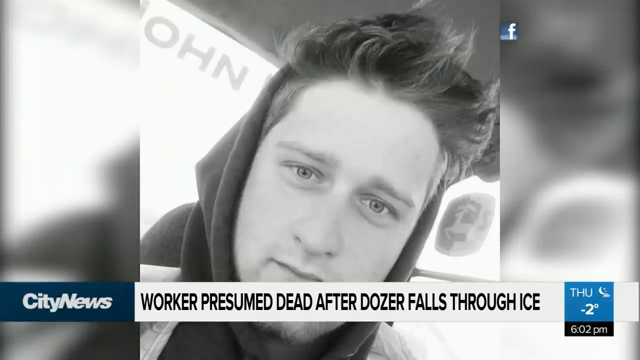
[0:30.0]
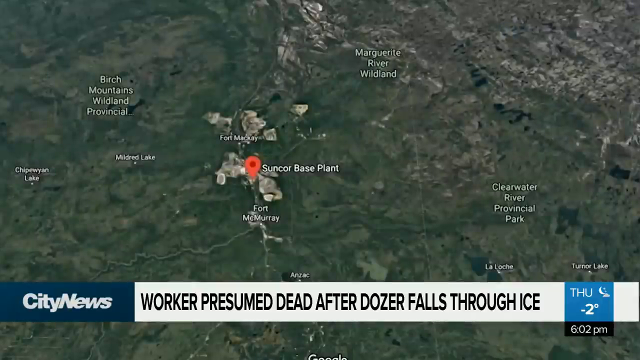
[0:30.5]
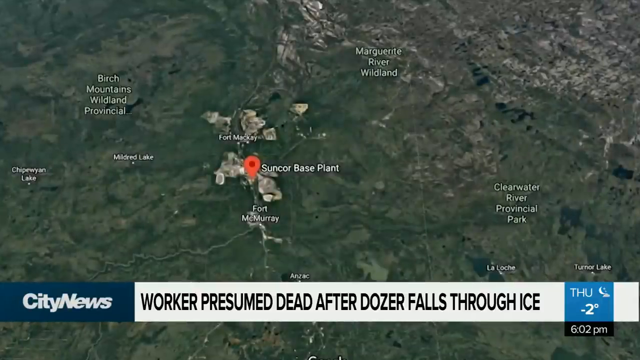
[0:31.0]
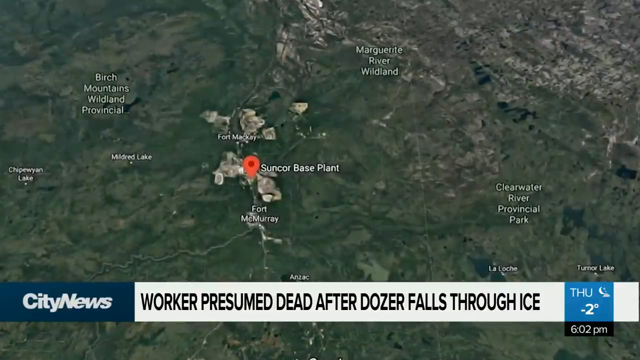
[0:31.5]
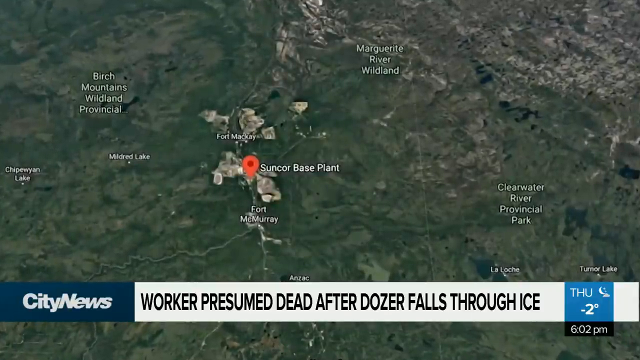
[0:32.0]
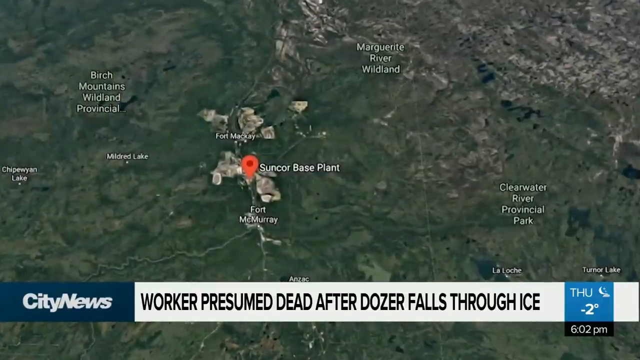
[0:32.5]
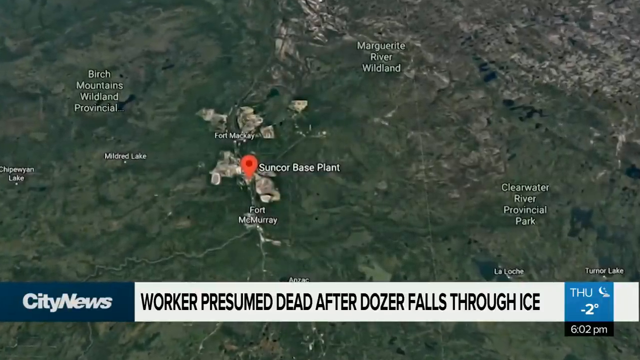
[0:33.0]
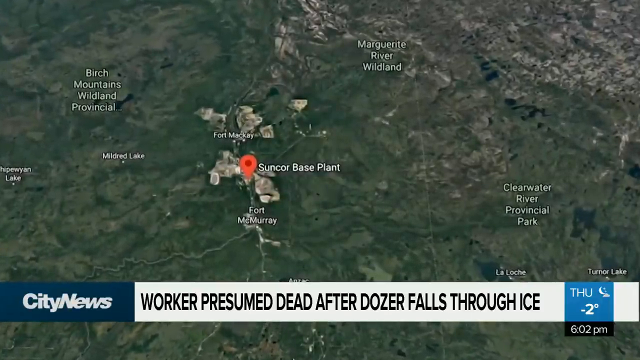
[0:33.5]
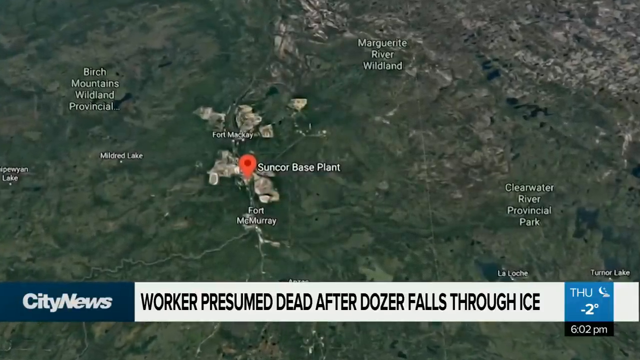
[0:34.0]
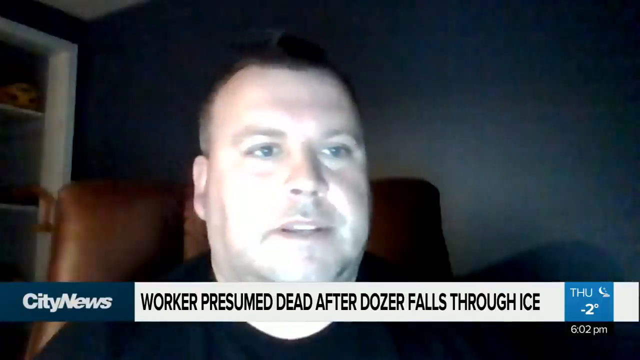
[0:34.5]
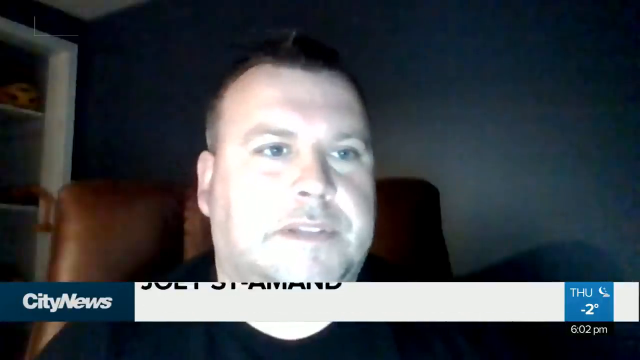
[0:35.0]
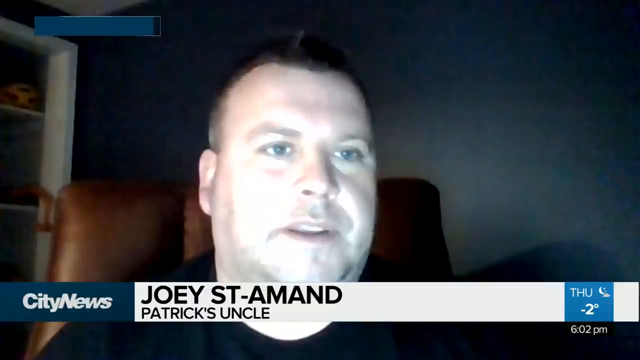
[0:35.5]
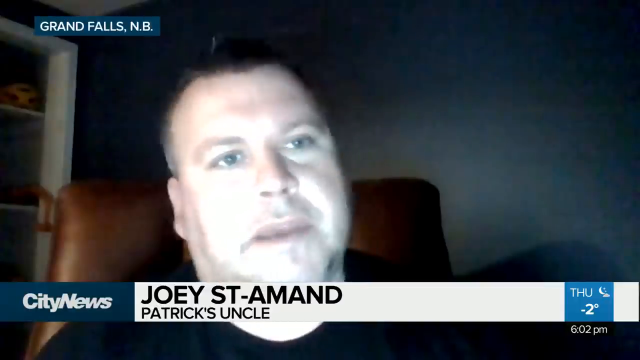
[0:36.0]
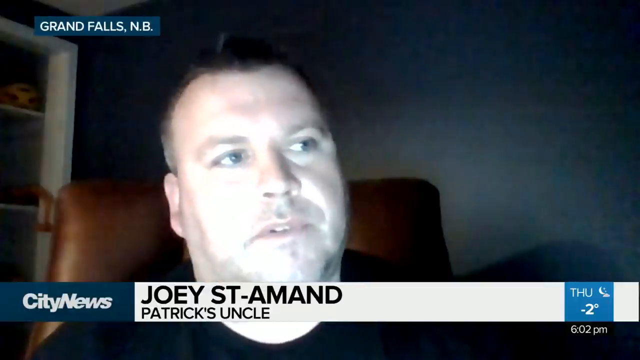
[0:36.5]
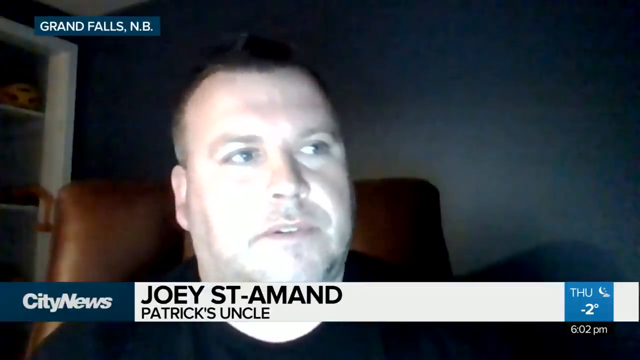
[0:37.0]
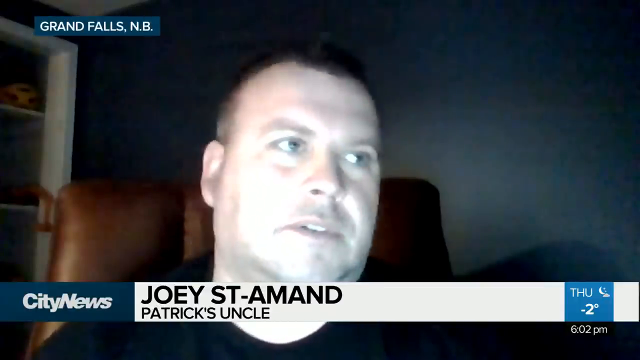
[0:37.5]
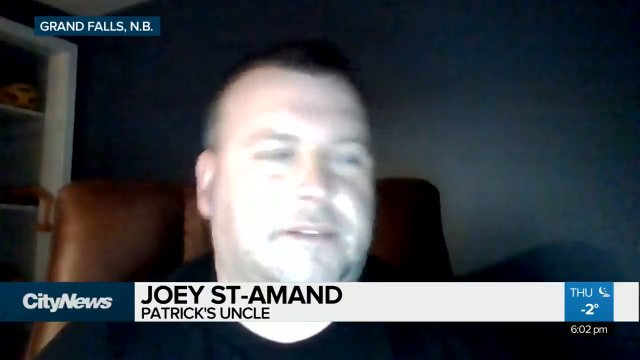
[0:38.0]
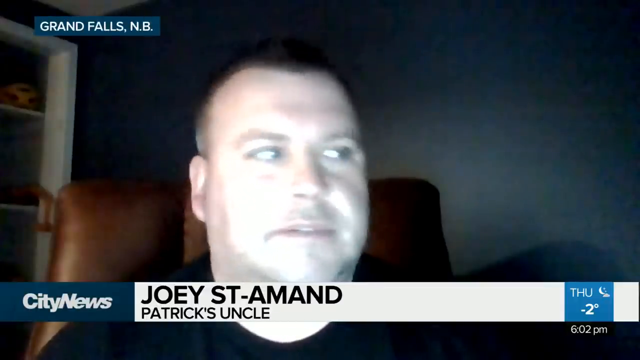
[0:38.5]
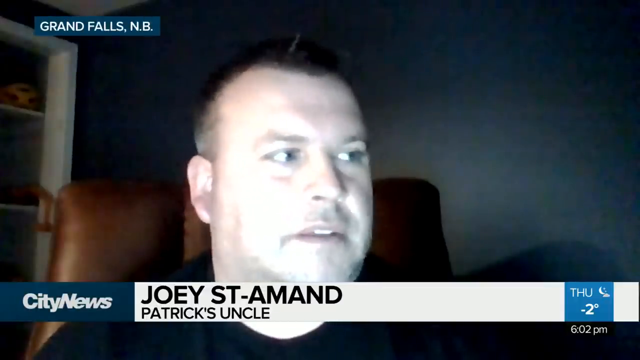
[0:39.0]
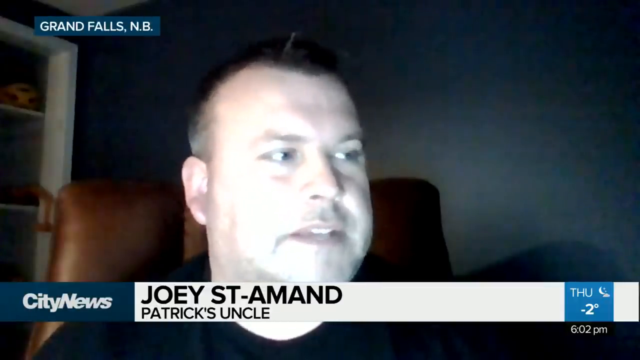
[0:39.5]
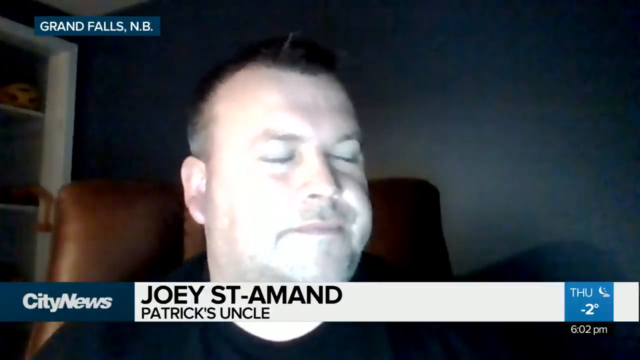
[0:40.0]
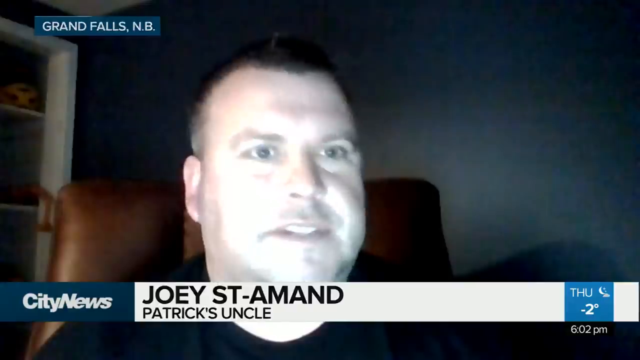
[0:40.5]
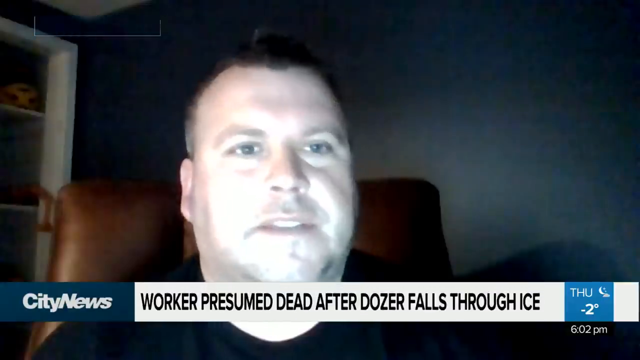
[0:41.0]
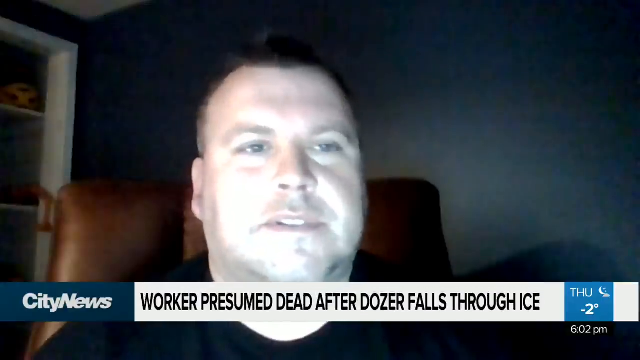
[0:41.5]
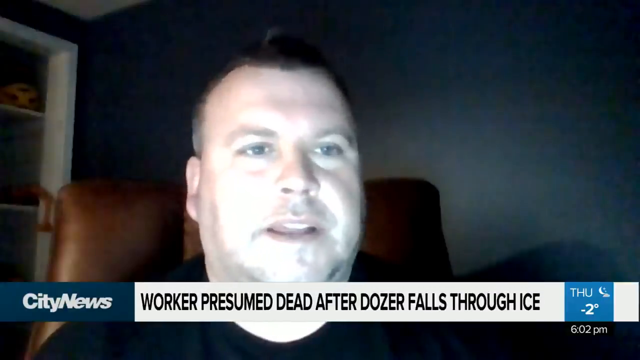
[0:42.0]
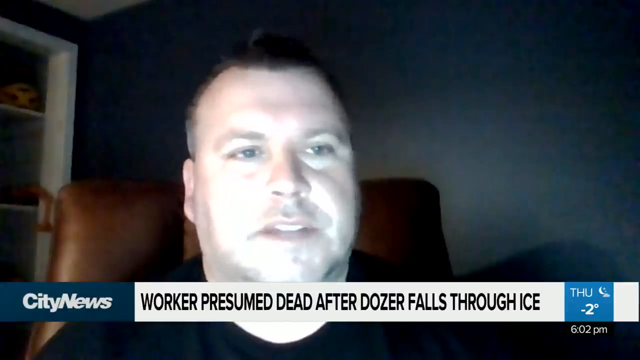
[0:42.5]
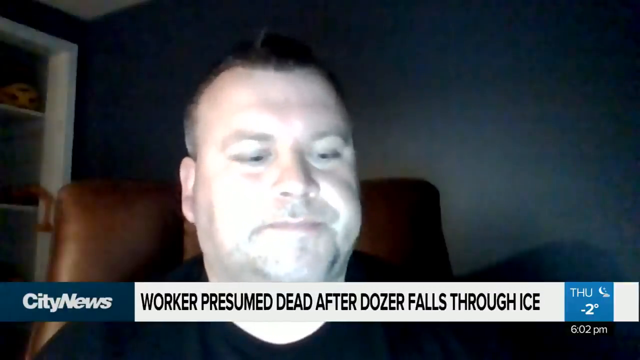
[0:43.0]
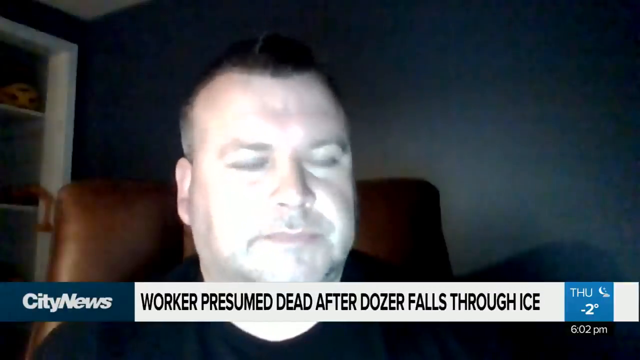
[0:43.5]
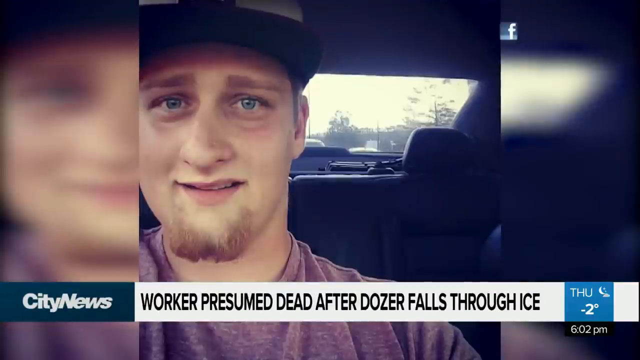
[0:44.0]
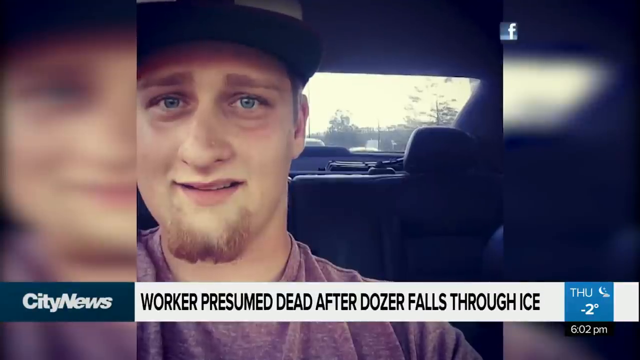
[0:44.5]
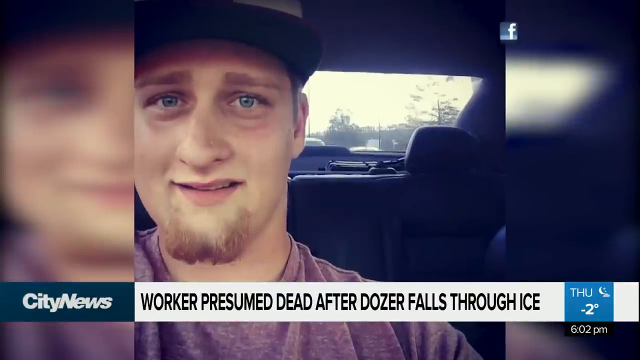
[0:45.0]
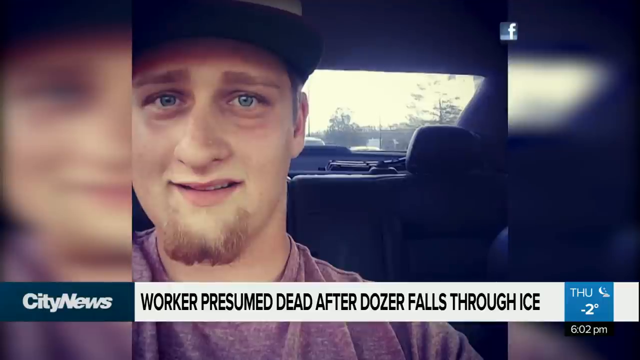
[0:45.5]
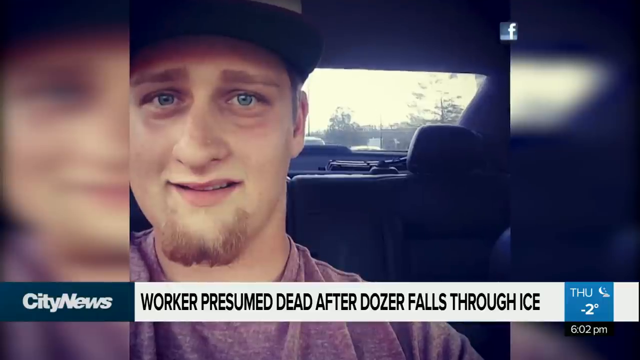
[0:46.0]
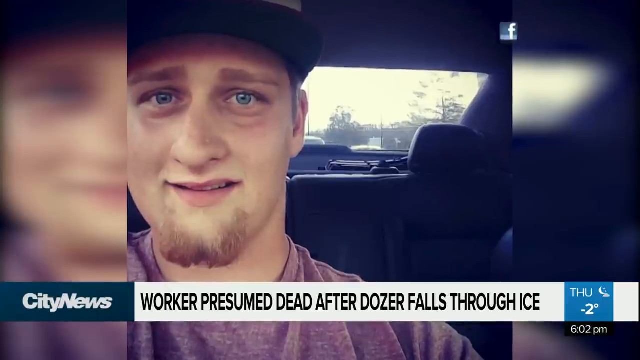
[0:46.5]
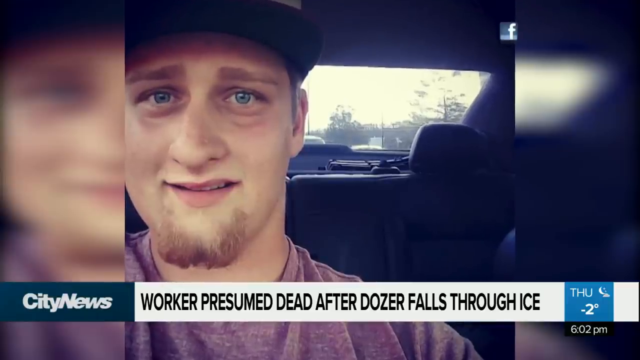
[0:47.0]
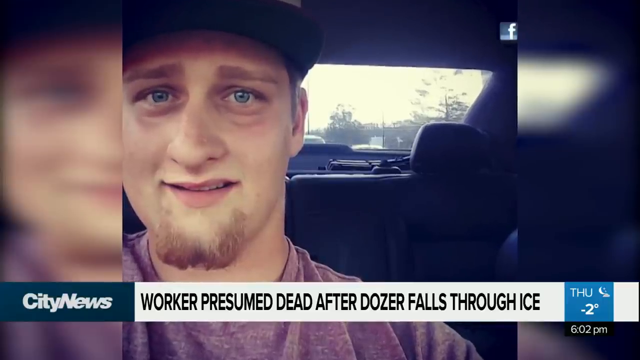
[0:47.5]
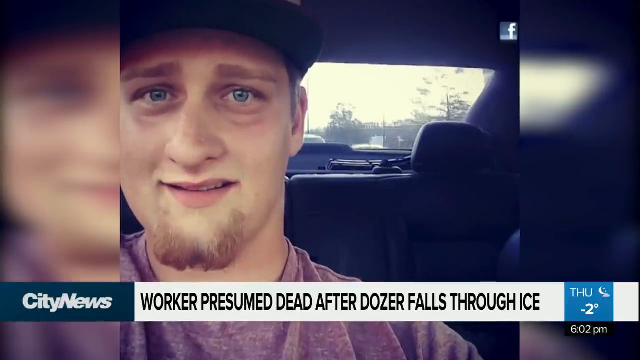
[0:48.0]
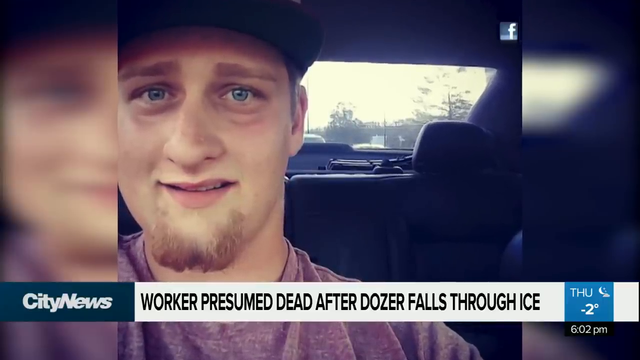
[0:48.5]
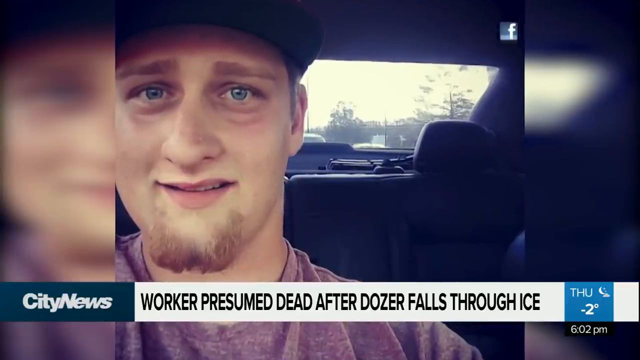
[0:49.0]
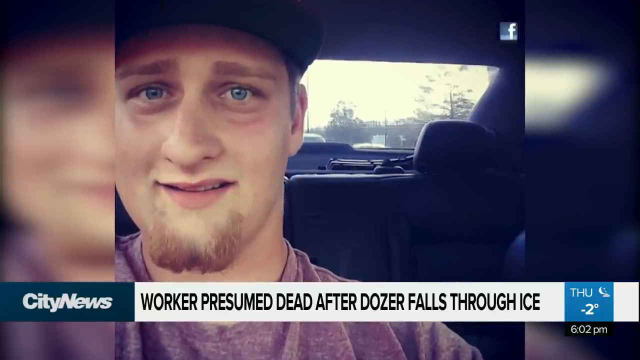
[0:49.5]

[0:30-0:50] A map of the local area appears with a pin at a place called "Suncor Base Plant"; around it are the labels "Marguerite River," "Wildland" and "Clearwater River Provincial." Underneath, the headline area has a blue box with white letters reading "City News" and a white box with black letters reading "worker presumed dead after dozer falls through ice." Joey St. Amand, Patrick's uncle, is interviewed via Zoom from Grand Falls NB, New Britain; he sits in a high-back brown computer chair, speaking directly to the camera. More Facebook pictures of the worker follow. A blue graphic in the bottom right corner shows that it is Thursday night, negative 2 degrees and 6.02 PM local time. The first picture of the worker is in black and white and shows him standing in front of a John Deere tractor.